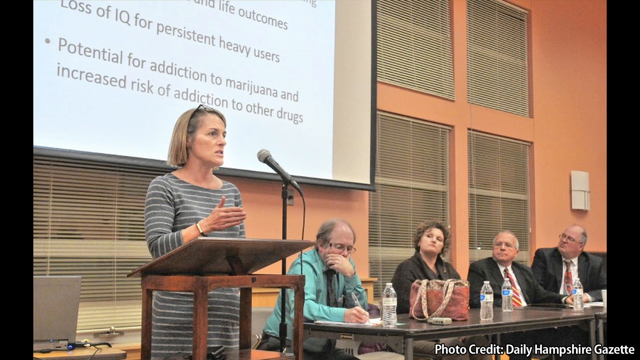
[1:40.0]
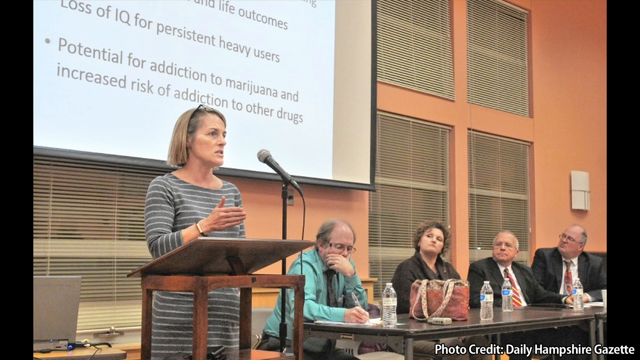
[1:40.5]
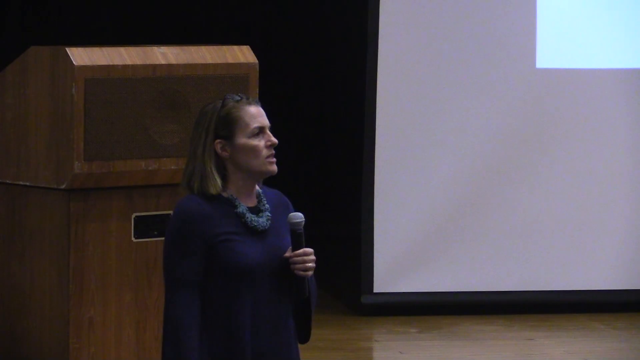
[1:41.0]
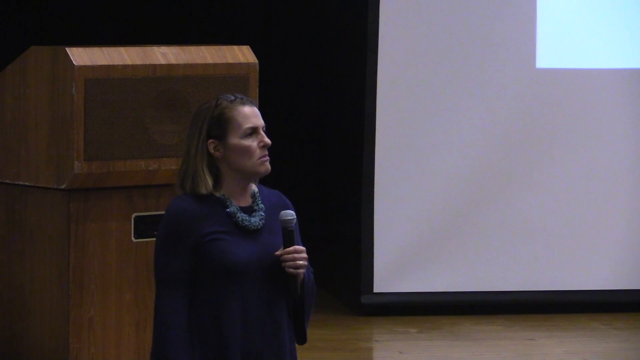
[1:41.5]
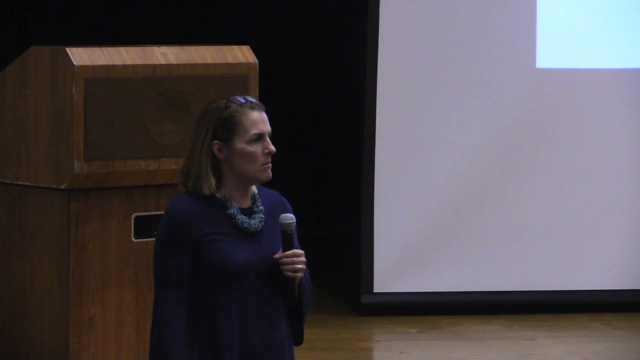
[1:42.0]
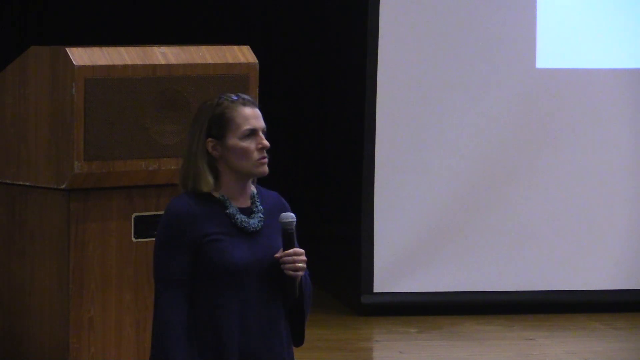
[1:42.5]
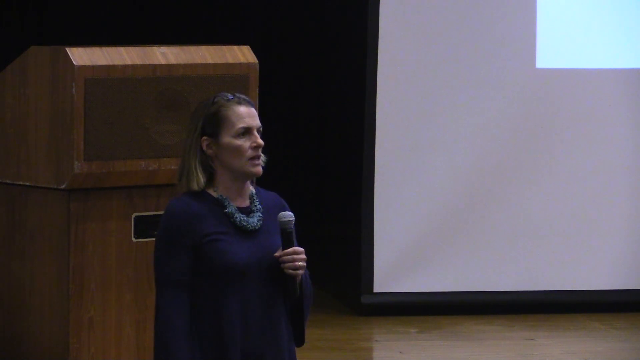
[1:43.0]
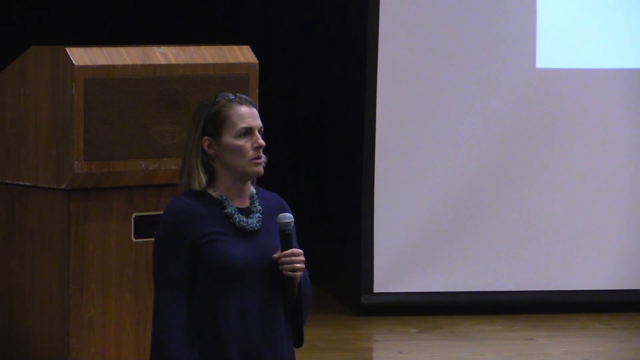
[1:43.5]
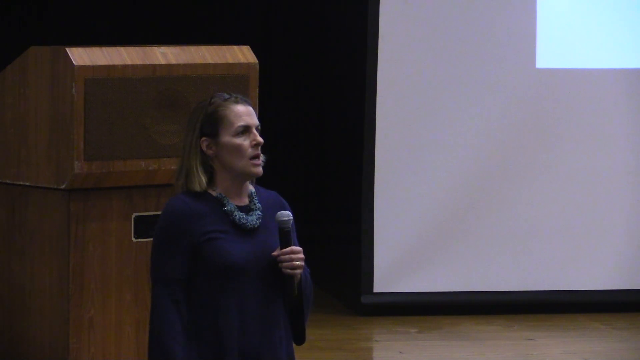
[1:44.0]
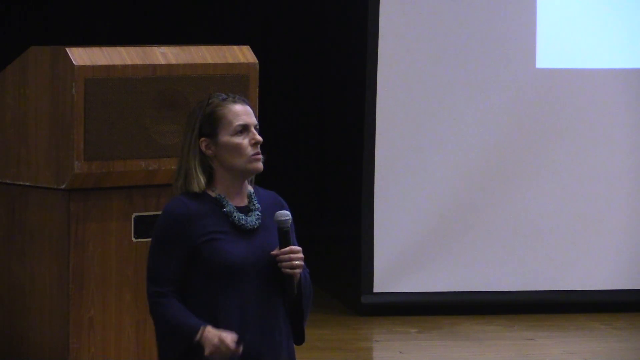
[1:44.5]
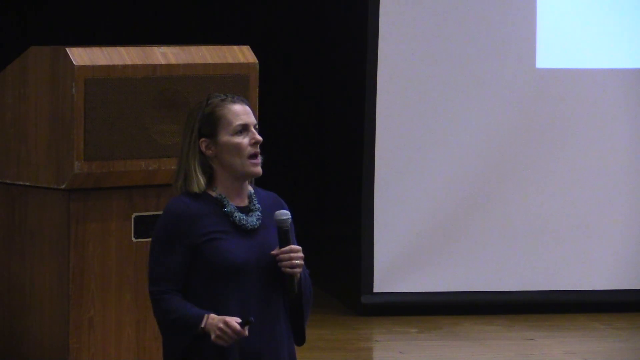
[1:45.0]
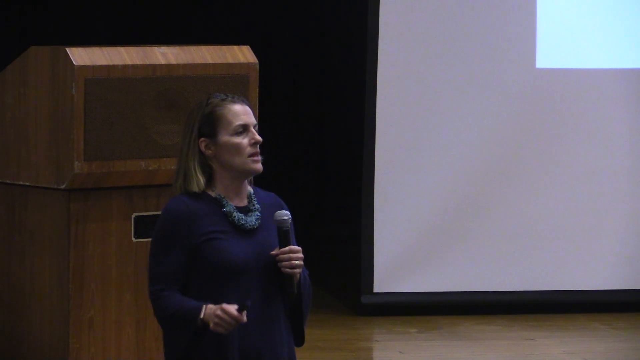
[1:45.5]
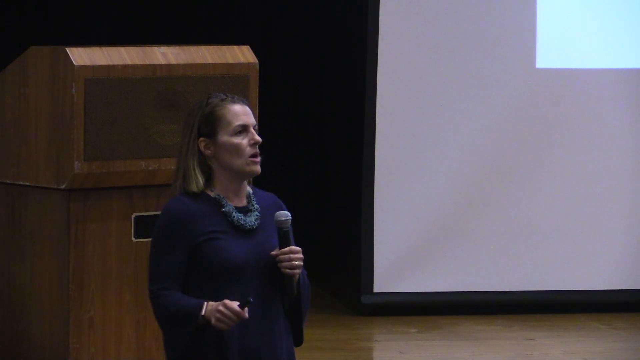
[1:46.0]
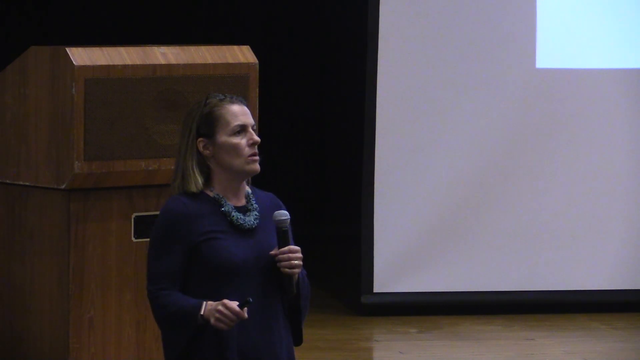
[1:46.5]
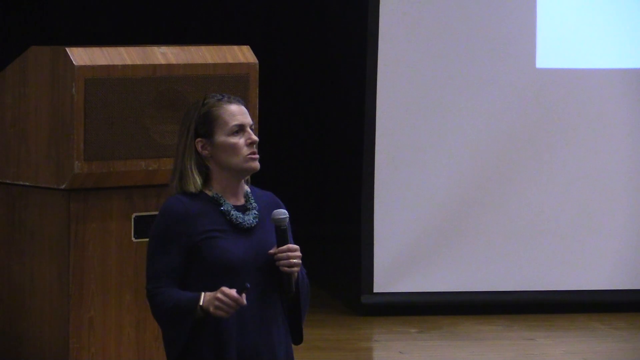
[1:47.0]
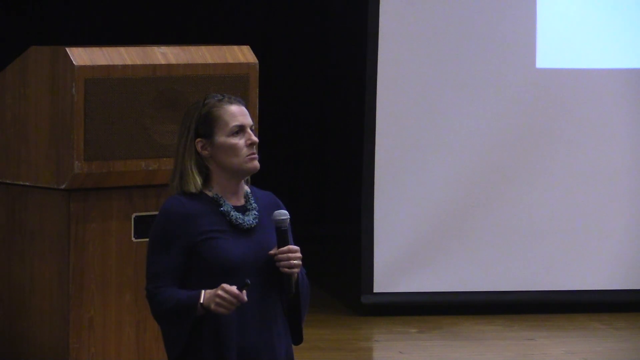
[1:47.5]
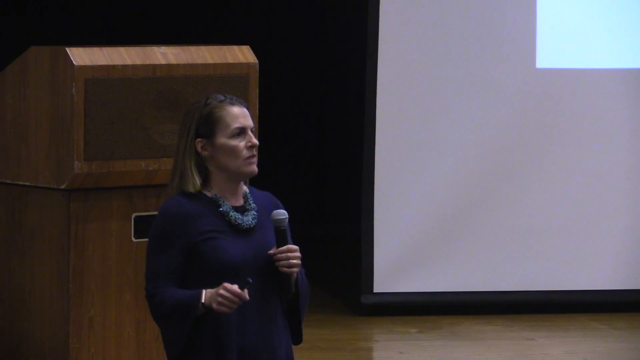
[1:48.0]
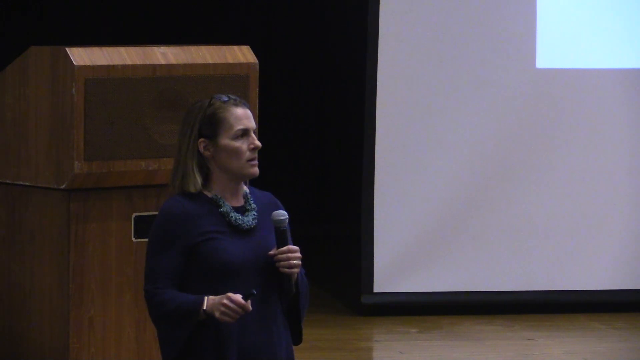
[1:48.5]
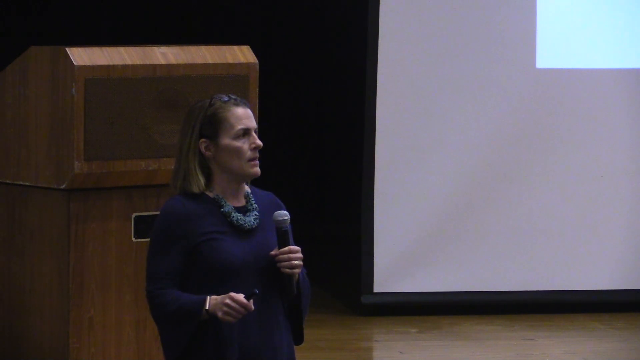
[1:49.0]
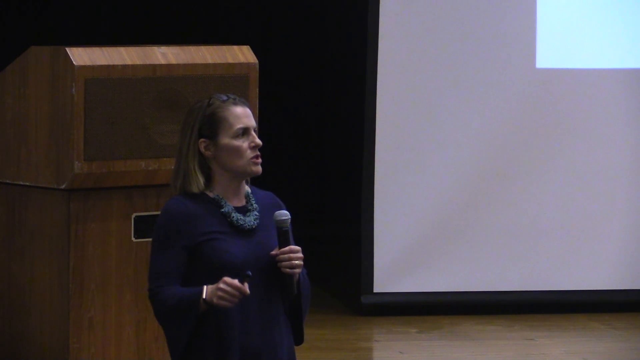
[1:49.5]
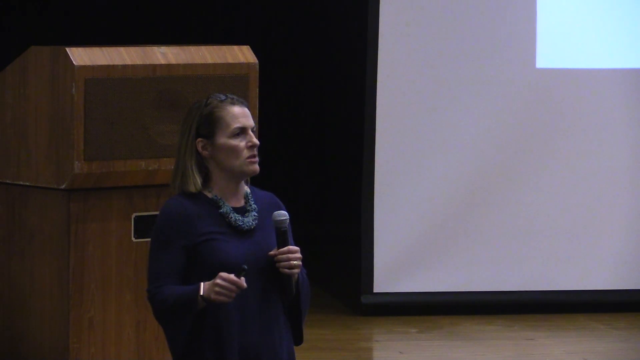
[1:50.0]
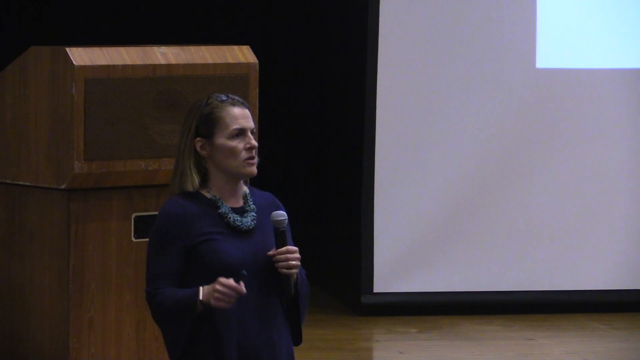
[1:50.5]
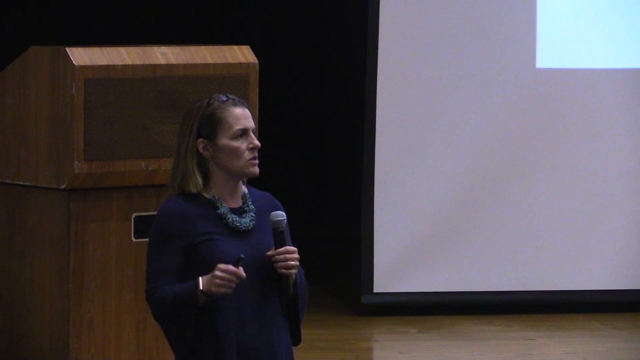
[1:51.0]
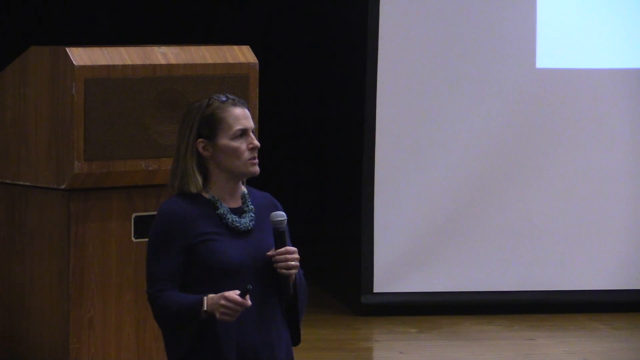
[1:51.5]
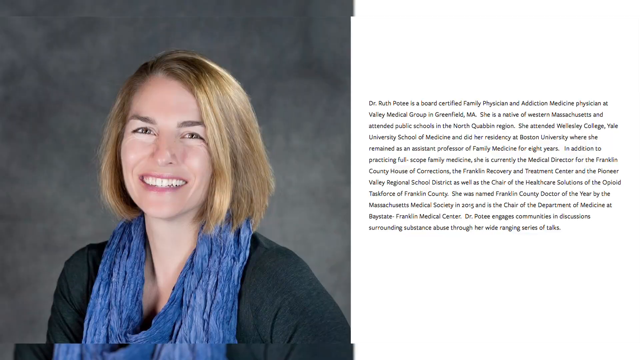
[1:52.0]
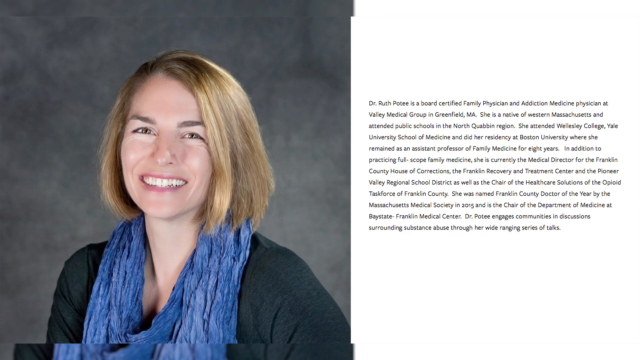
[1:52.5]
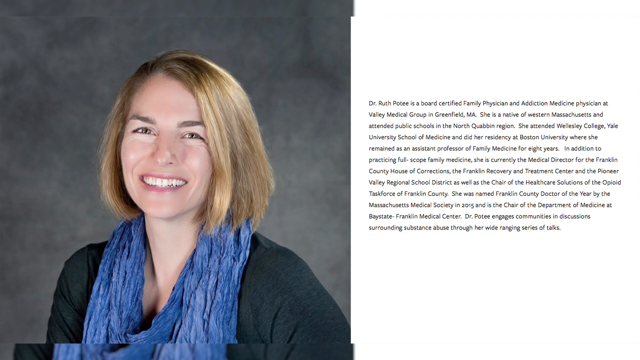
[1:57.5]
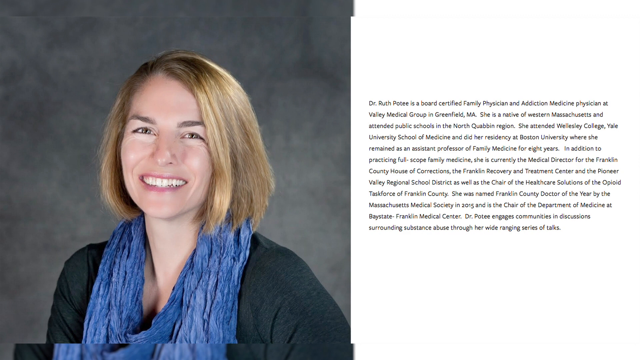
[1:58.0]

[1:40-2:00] The video returns to live footage of the woman lecturing in her blue dress, holding the microphone in her left hand. She continues making notes while moving her right hand up and down. The video then cuts to an image of her: on the left side of the screen is an image of her younger self wearing a black dress and a blue scarf, with shoulder-length blonde hair. On the right is what looks like her medical resume or credentials listed out, though the details are very hard to make out; she seems to have many credentials.